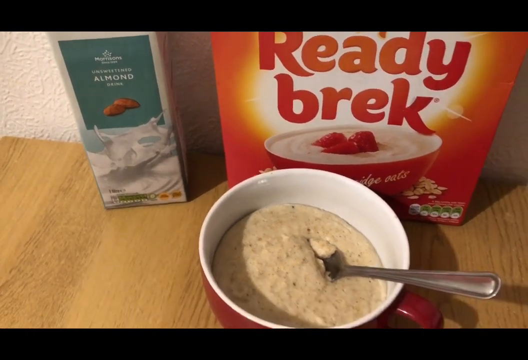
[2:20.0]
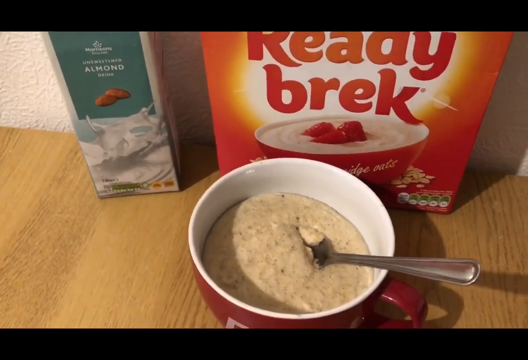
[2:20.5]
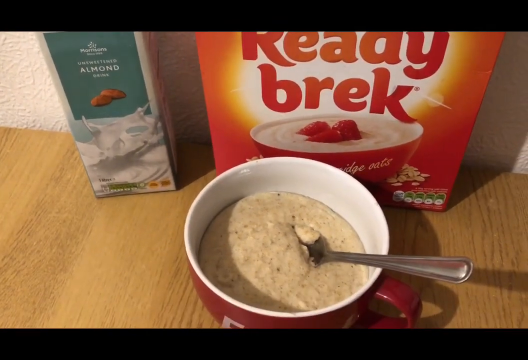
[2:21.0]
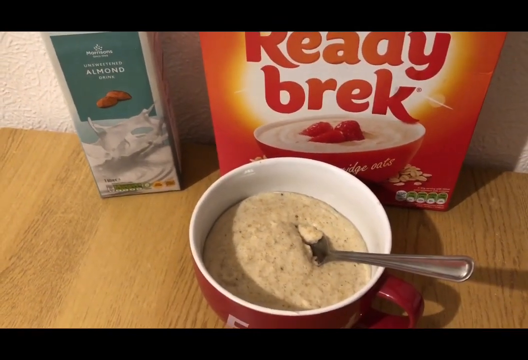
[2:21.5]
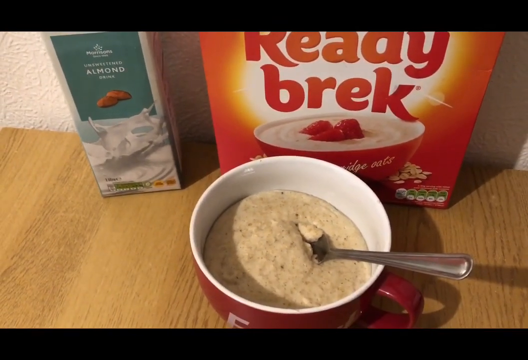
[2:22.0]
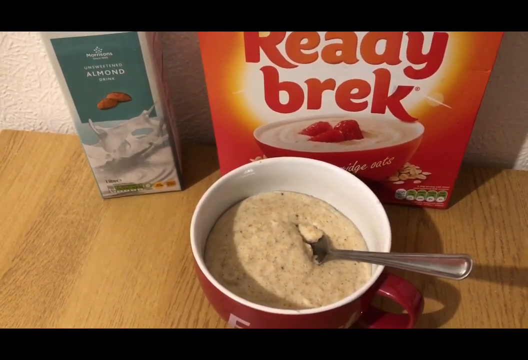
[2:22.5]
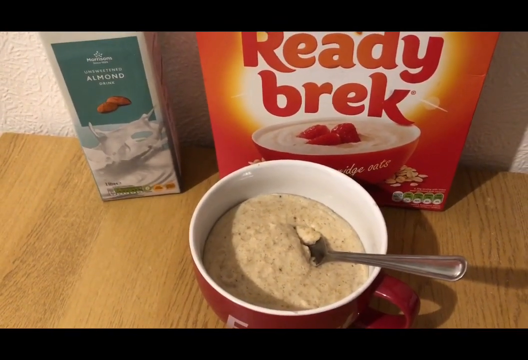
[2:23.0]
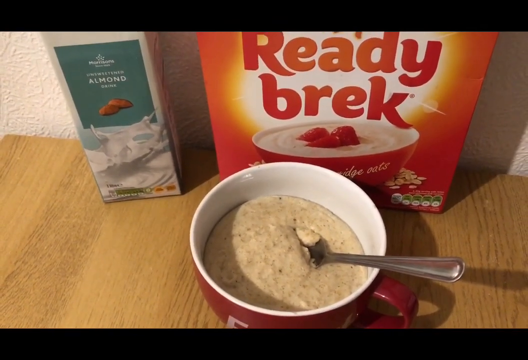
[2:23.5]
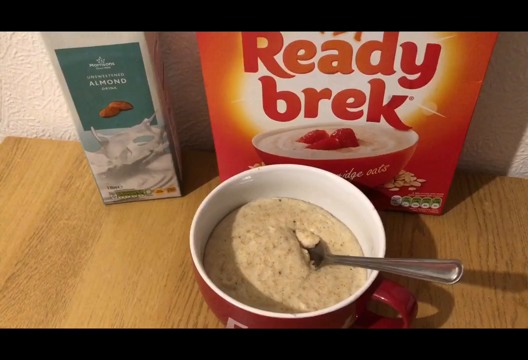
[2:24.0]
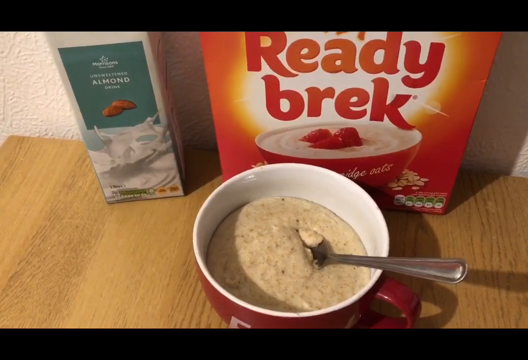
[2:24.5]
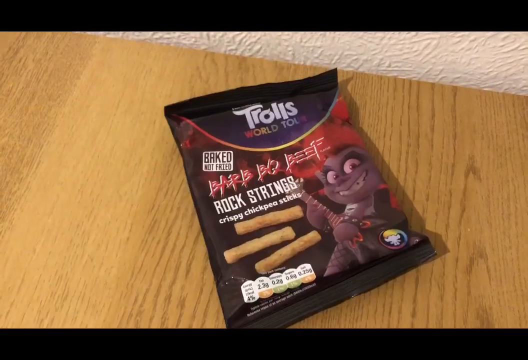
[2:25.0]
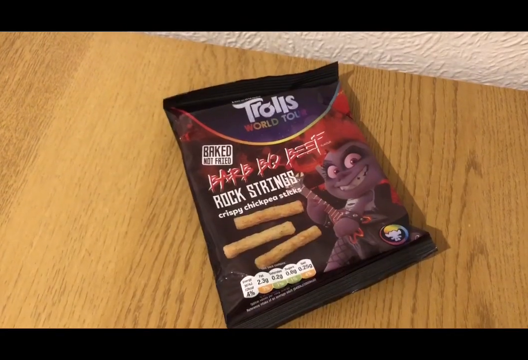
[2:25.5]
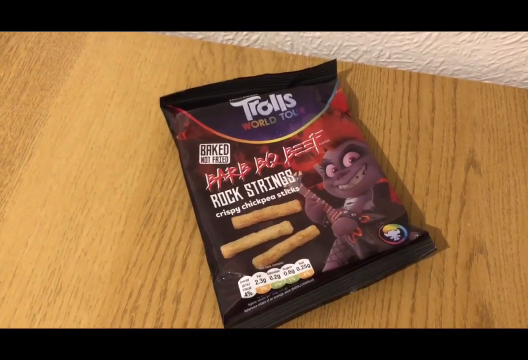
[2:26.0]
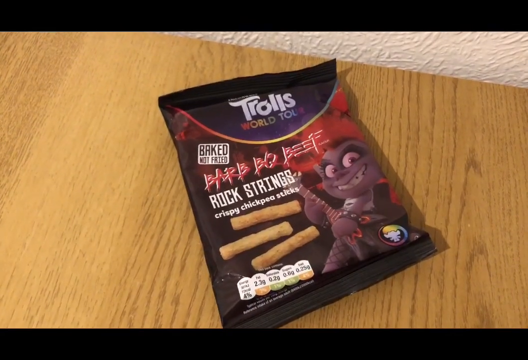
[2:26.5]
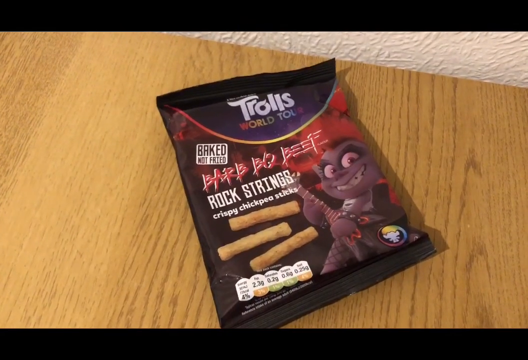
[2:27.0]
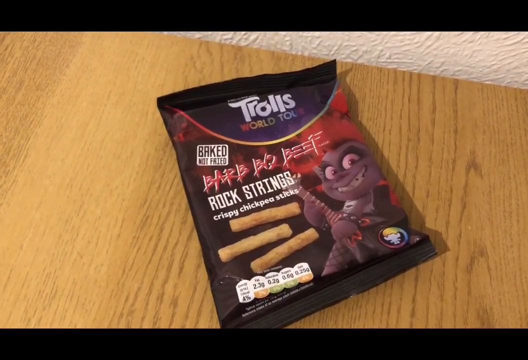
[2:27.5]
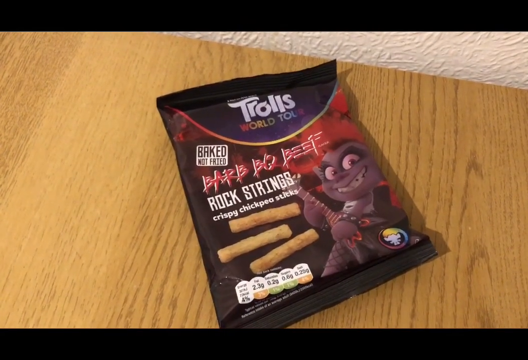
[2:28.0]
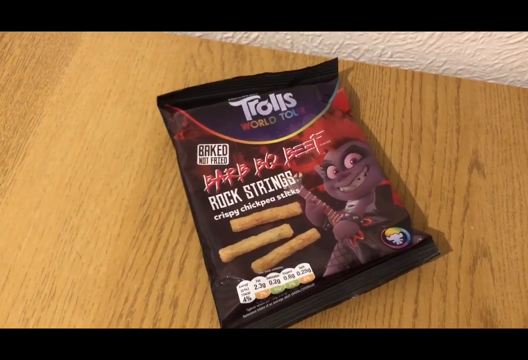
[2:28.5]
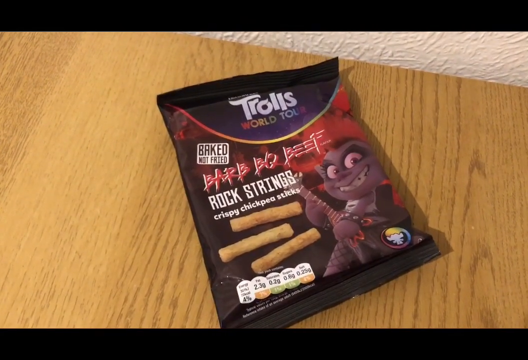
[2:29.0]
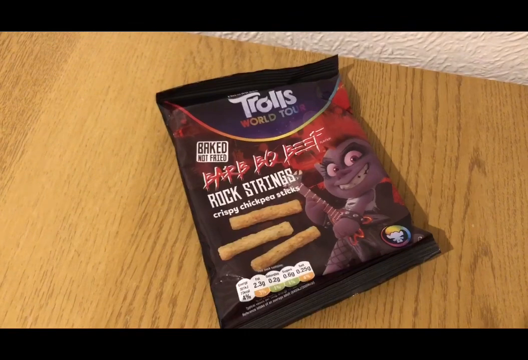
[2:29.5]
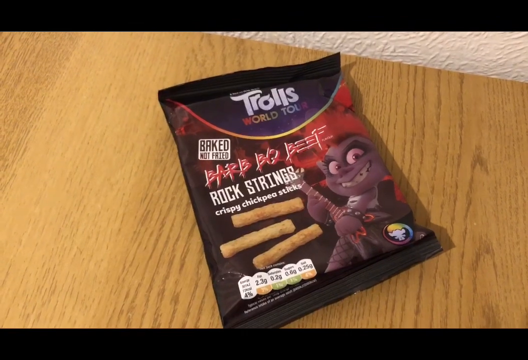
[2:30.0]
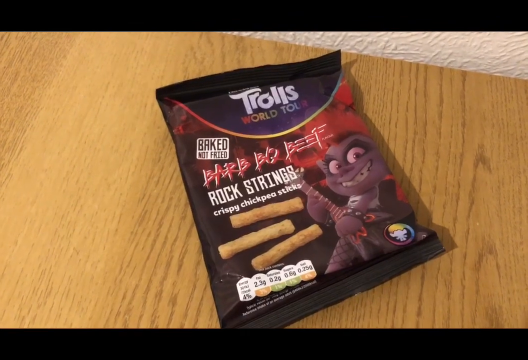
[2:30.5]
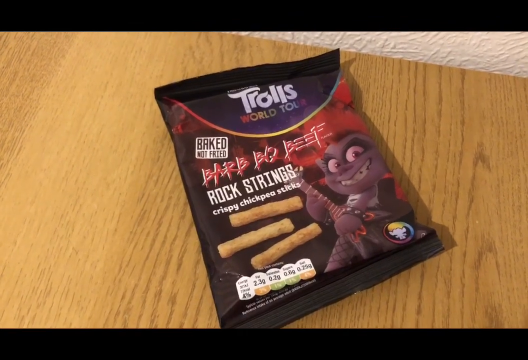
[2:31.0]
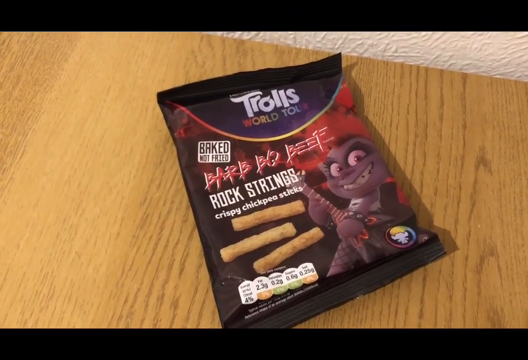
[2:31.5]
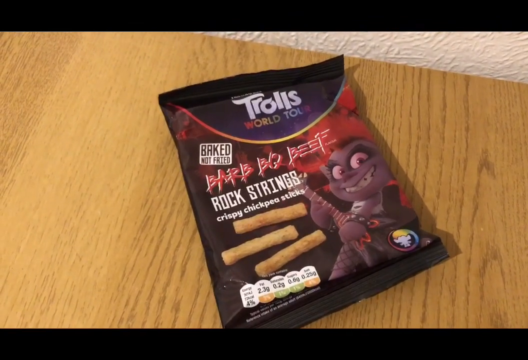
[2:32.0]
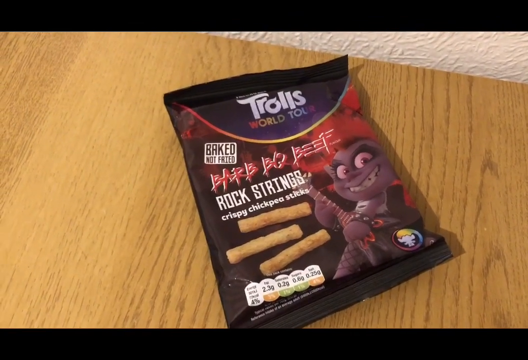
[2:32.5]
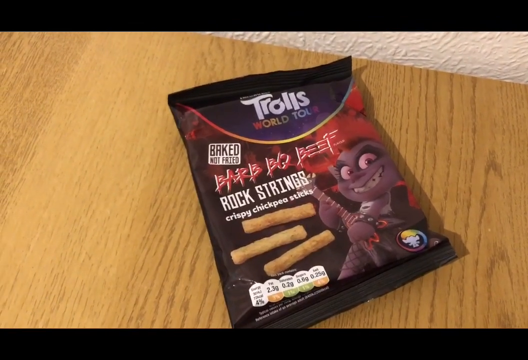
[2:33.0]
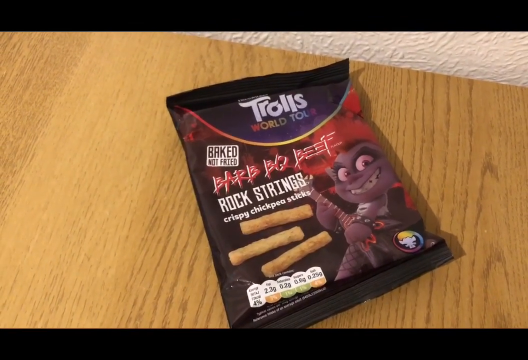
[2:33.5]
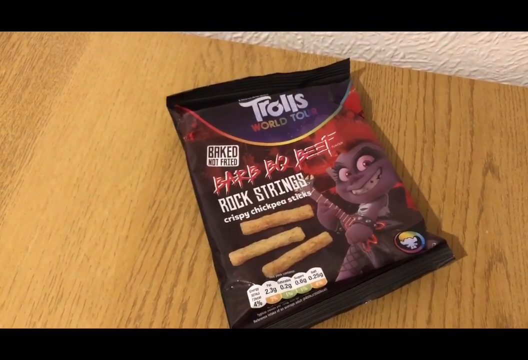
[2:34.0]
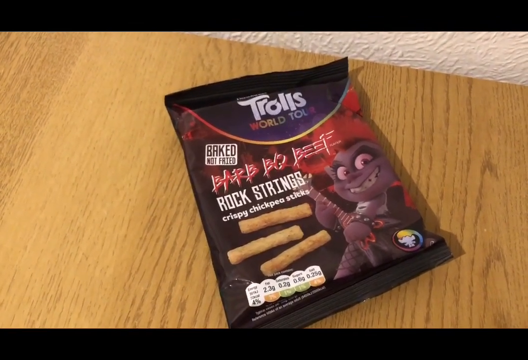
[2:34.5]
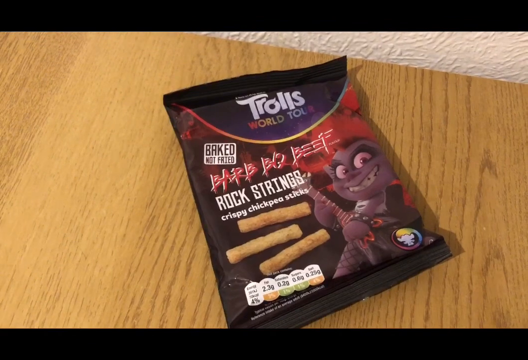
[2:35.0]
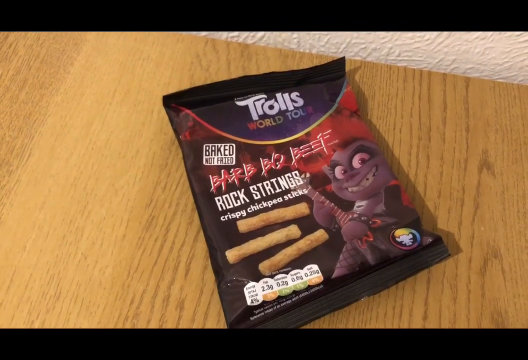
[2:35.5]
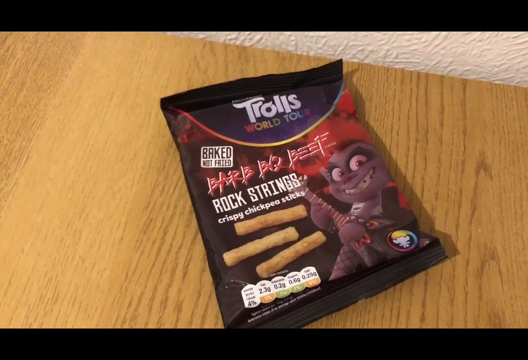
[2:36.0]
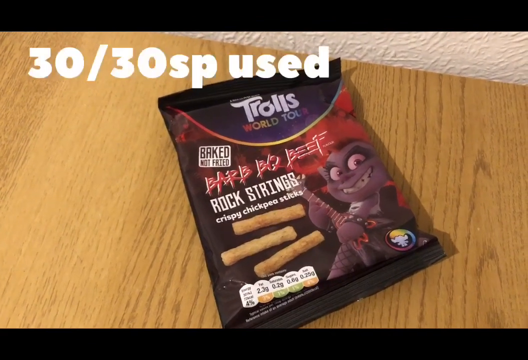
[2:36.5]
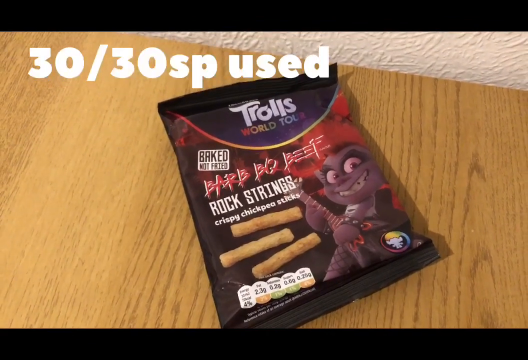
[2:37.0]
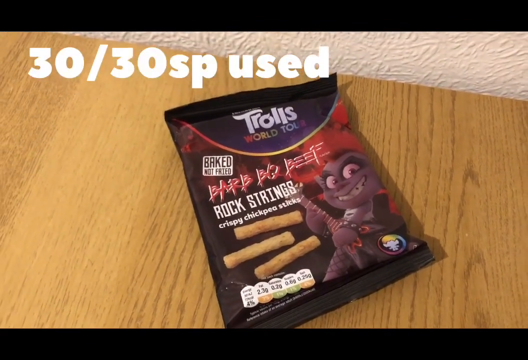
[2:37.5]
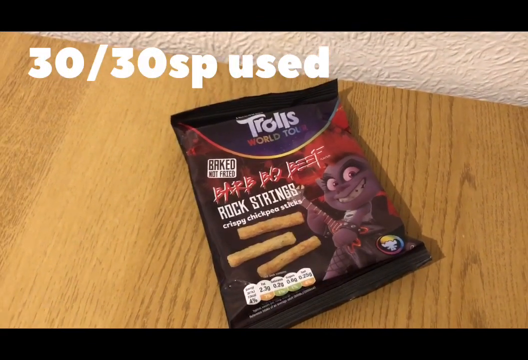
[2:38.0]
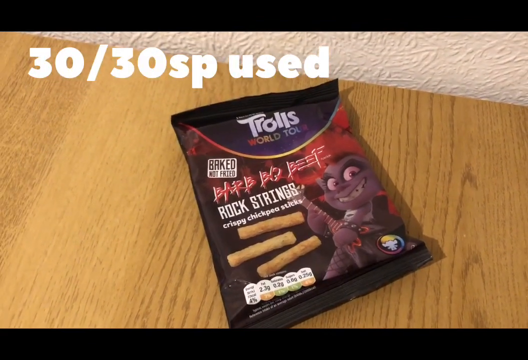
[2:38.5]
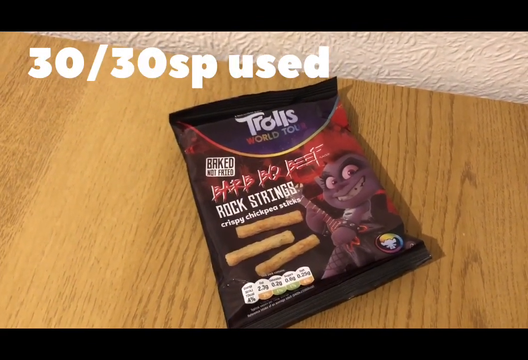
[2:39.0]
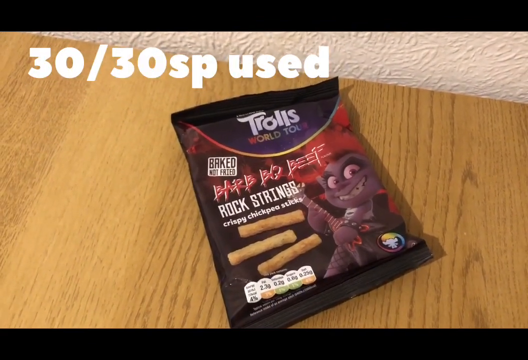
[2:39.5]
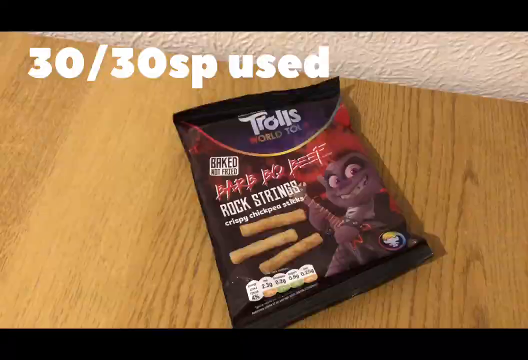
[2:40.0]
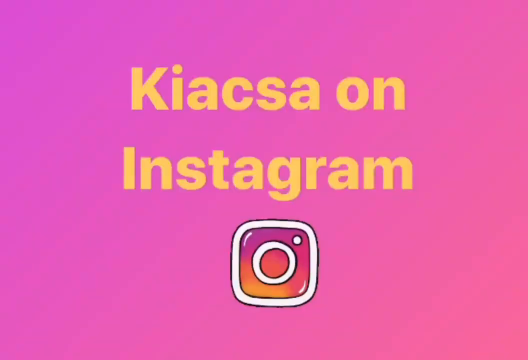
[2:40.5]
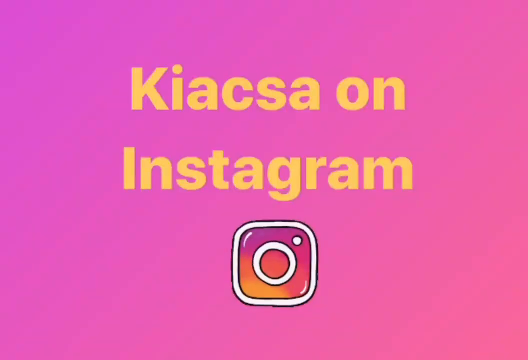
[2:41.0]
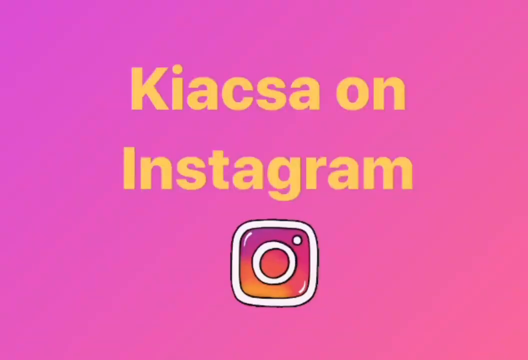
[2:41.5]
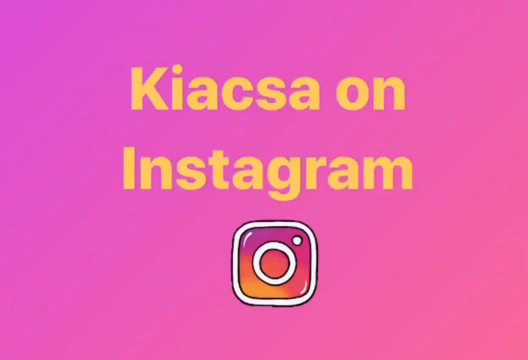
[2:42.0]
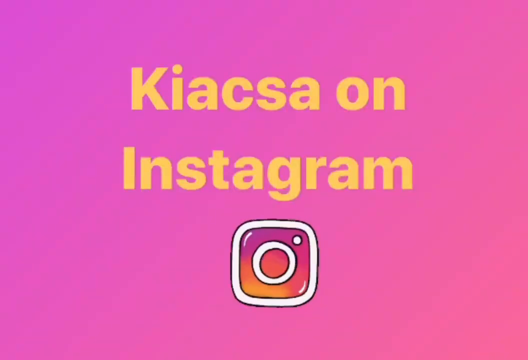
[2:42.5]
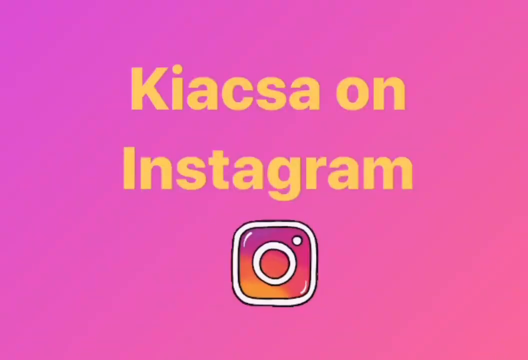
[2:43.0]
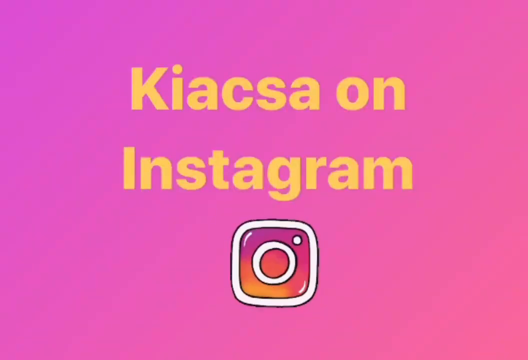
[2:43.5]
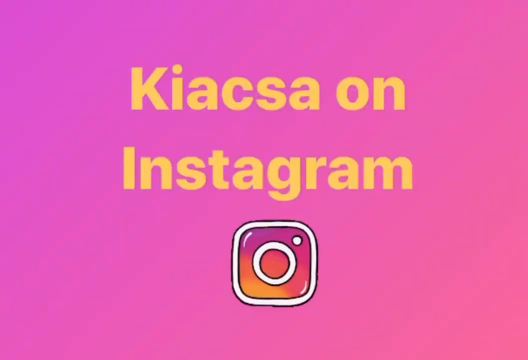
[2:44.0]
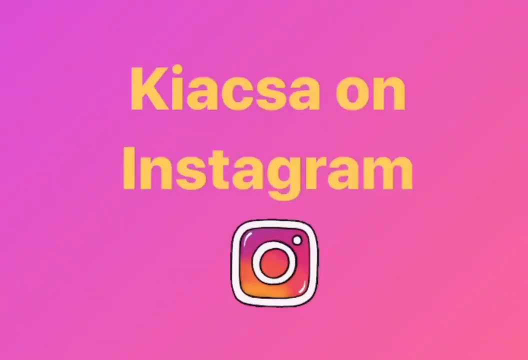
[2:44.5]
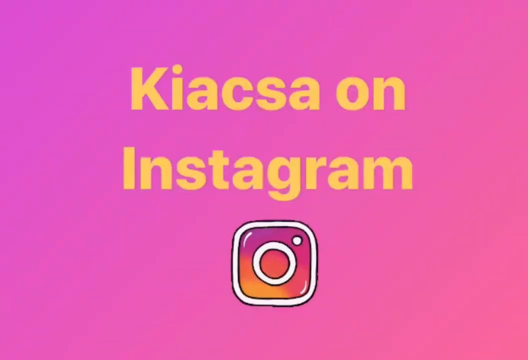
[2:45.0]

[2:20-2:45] On a light brown wooden tabletop is a large red cup of cream-colored oats that look very creamy and thick, with small brown specks and a silver spoon inside. Behind the bowl is a large square red box that says "READY BREK" in large red letters, with a picture underneath of a red bowl of white oats with three raspberries on top. To the left of the box is a tall rectangular box container with a dark green rectangle on the front where white text says "UNSWEETENED ALMOND MILK," with something like two pictures of almonds underneath and splashes of white milk below that. It looks like someone is standing in front of the table filming while looking down at the food. The screen changes to the same tabletop with just one black rectangular bag that says "Trolls World Tour" on top. On the right of the bag is a purple-looking troll playing a black electric guitar. To its left are three light brown snacks that sort of look like fries, pictured on the package. Red text says "barbecue beef," and underneath white text says "rock strings, crispy chickpea sticks." The screen then changes to a bright pink background with yellow text in the middle that says "Kiacsa on Instagram," and a little cartoon version of the Instagram logo underneath.